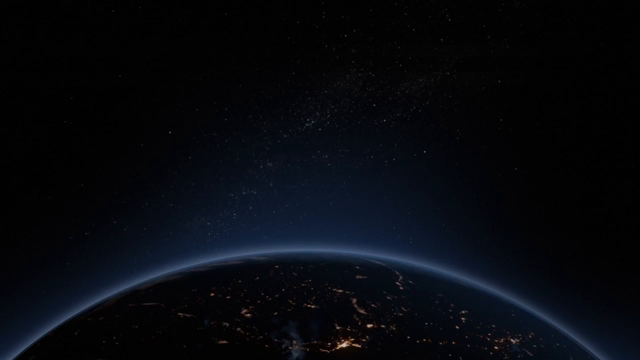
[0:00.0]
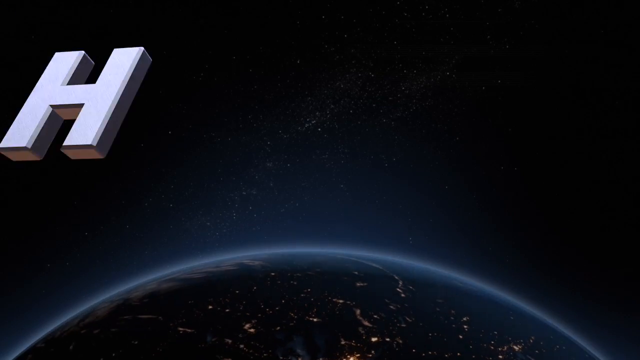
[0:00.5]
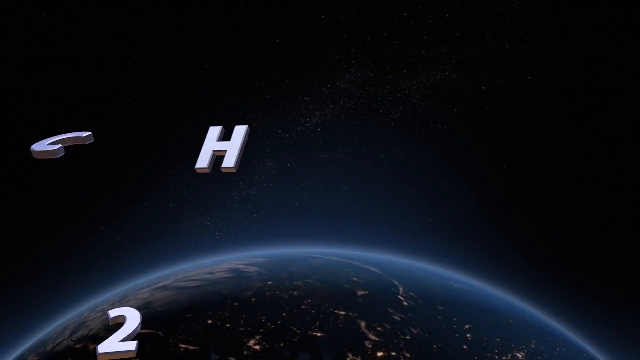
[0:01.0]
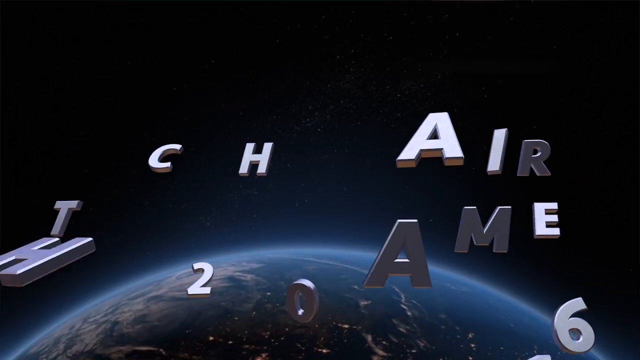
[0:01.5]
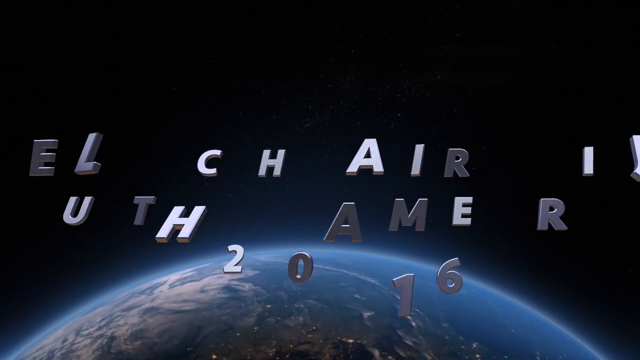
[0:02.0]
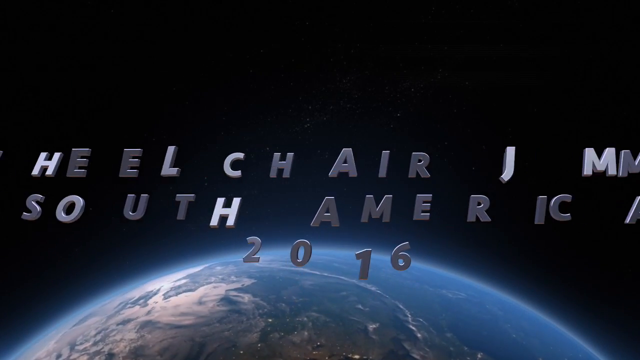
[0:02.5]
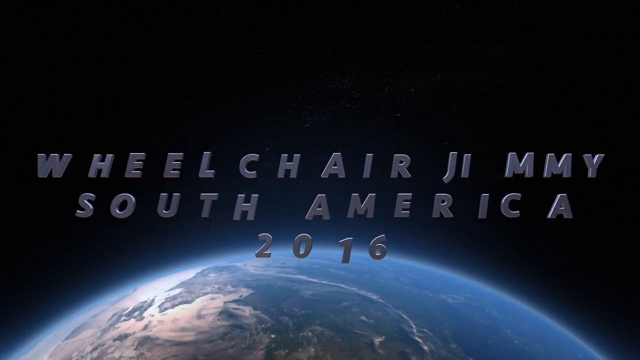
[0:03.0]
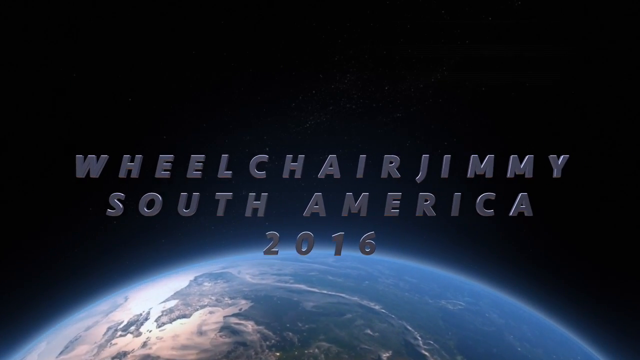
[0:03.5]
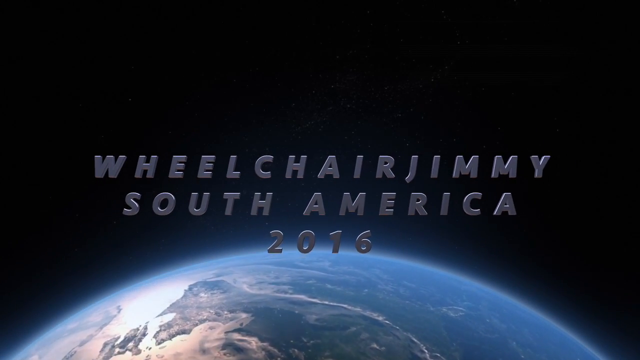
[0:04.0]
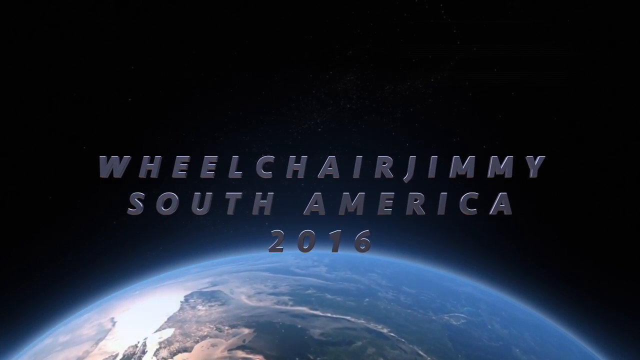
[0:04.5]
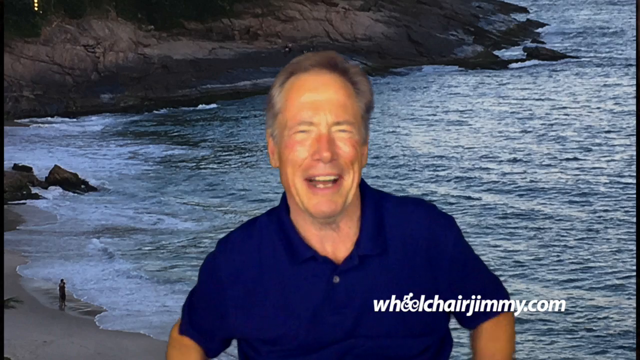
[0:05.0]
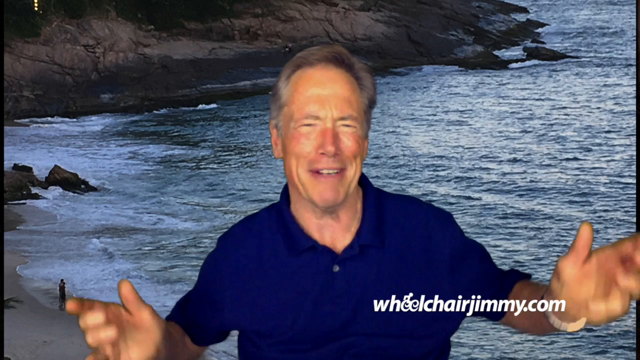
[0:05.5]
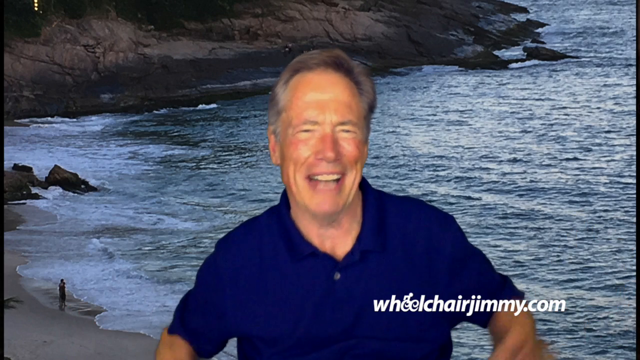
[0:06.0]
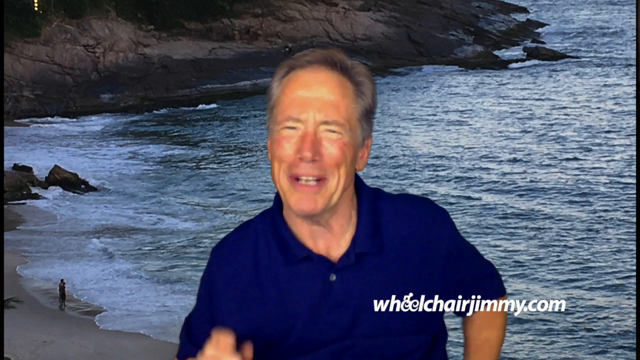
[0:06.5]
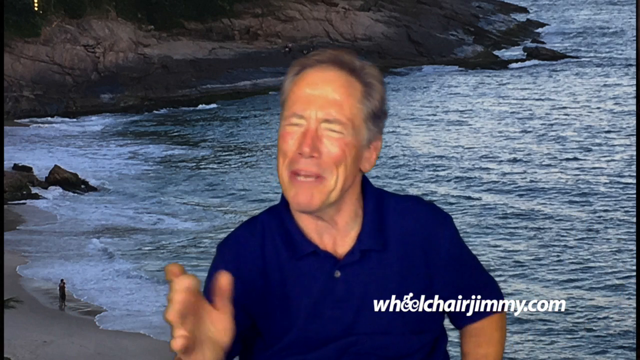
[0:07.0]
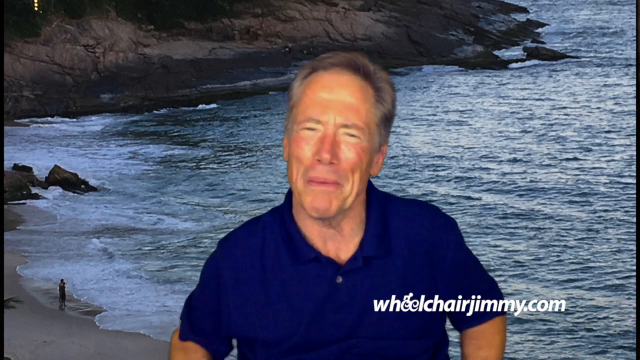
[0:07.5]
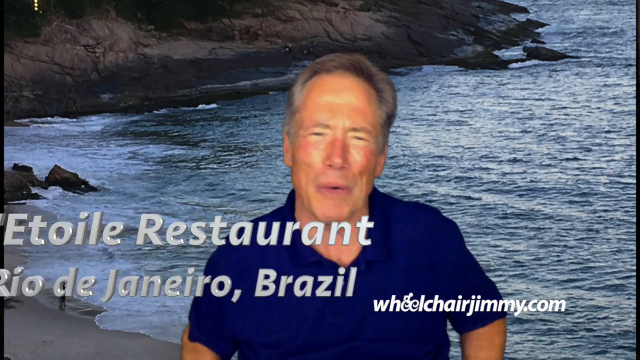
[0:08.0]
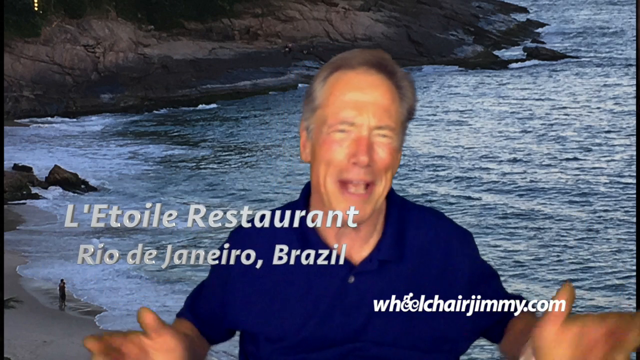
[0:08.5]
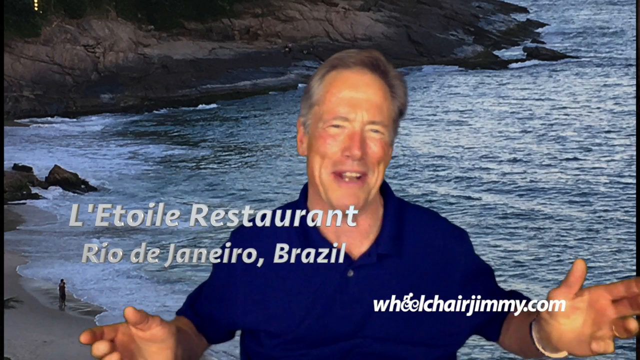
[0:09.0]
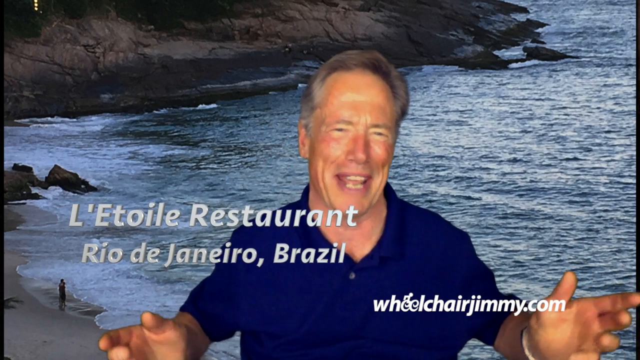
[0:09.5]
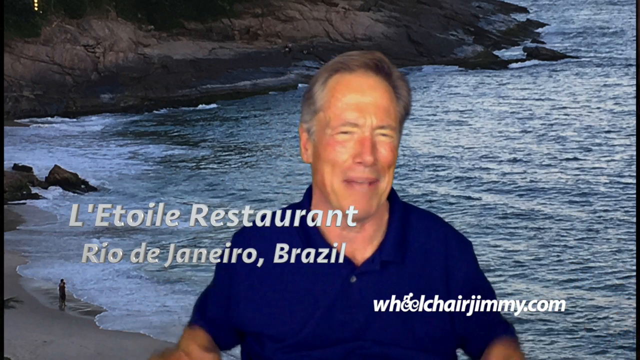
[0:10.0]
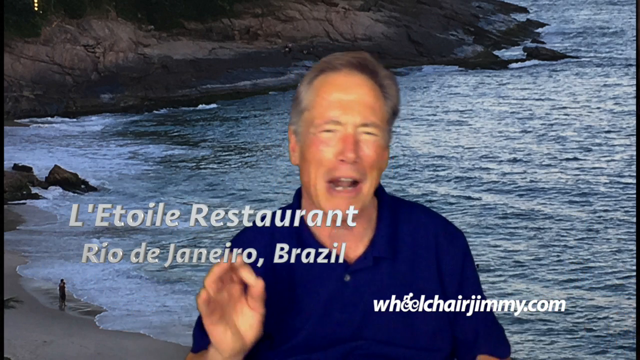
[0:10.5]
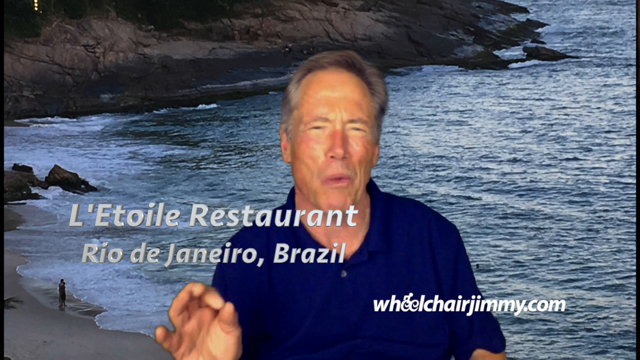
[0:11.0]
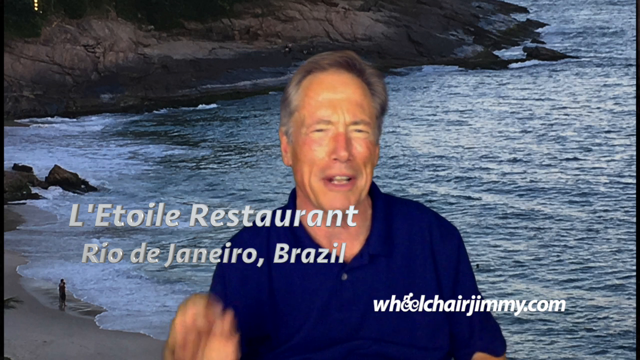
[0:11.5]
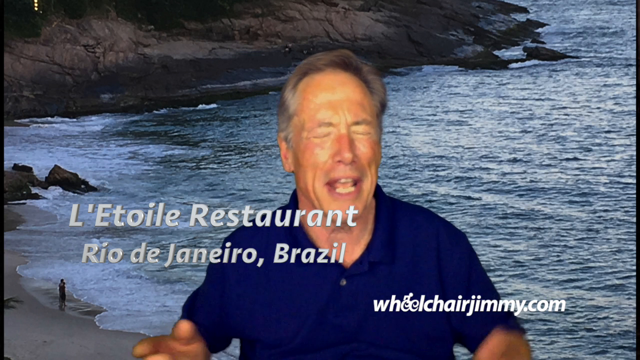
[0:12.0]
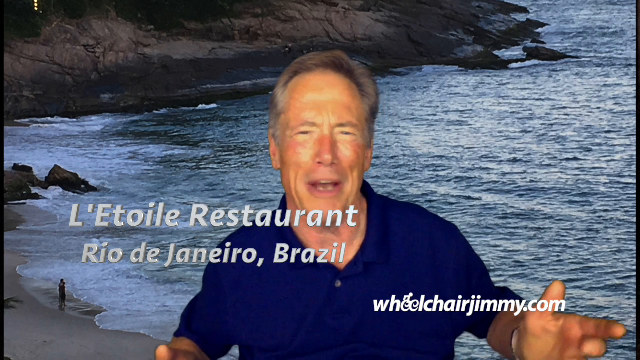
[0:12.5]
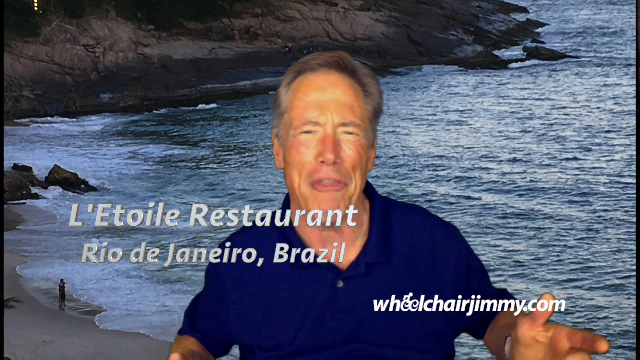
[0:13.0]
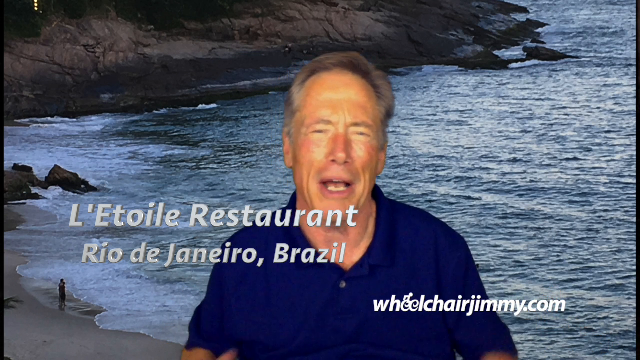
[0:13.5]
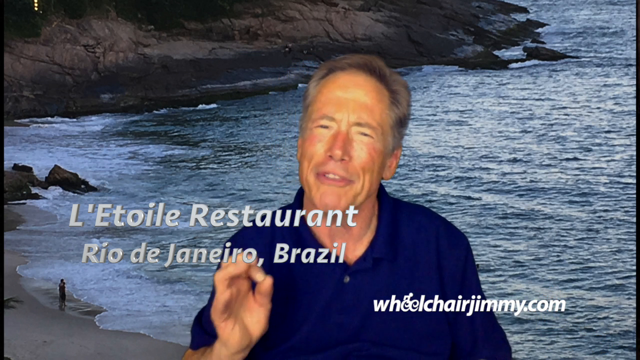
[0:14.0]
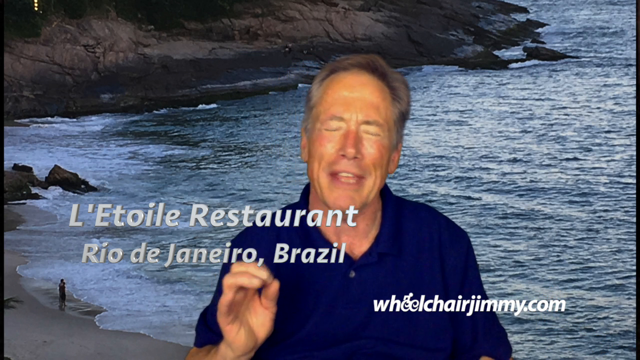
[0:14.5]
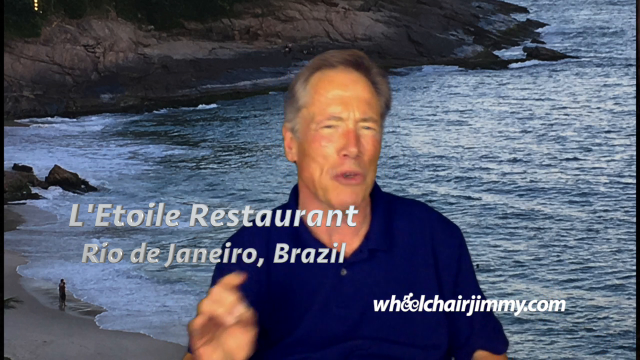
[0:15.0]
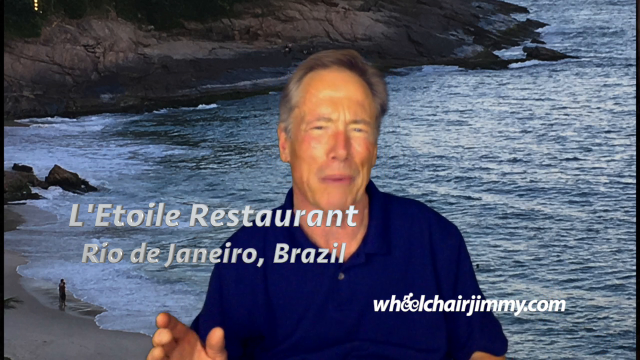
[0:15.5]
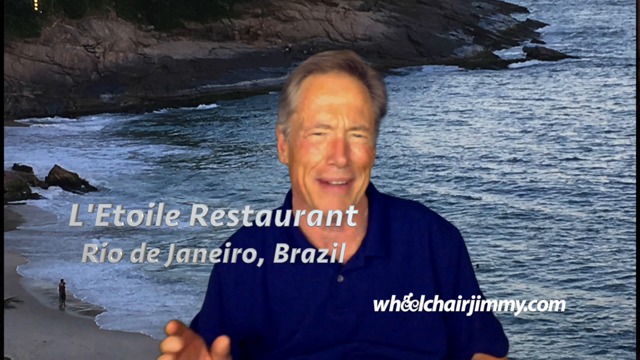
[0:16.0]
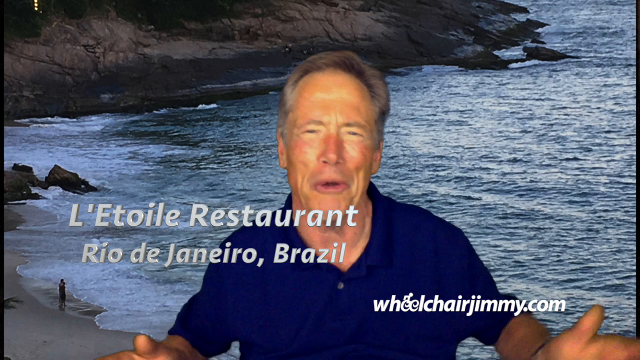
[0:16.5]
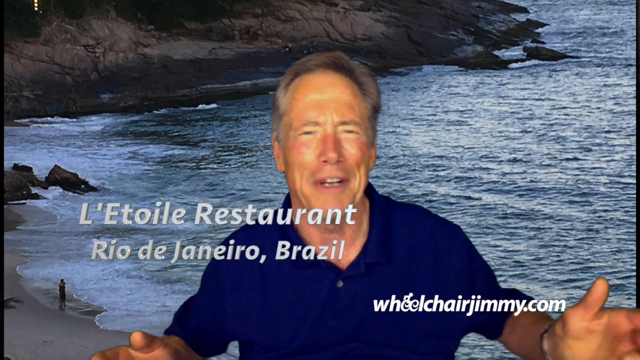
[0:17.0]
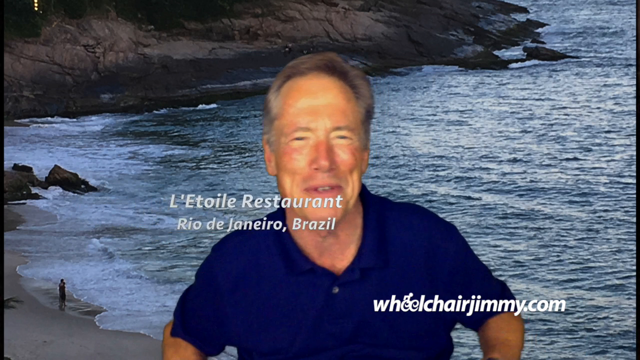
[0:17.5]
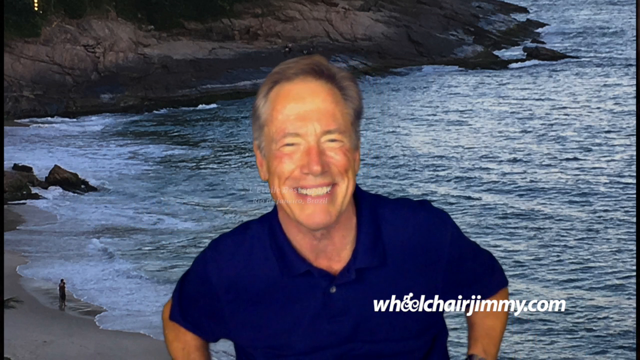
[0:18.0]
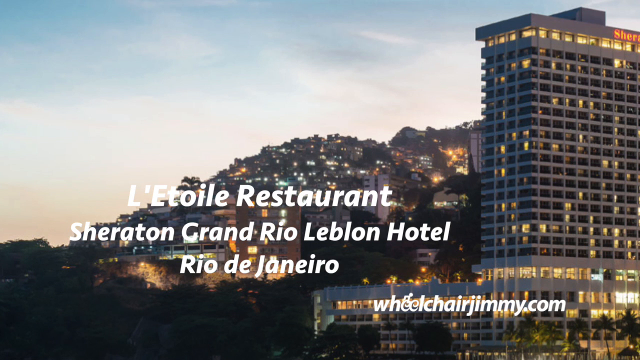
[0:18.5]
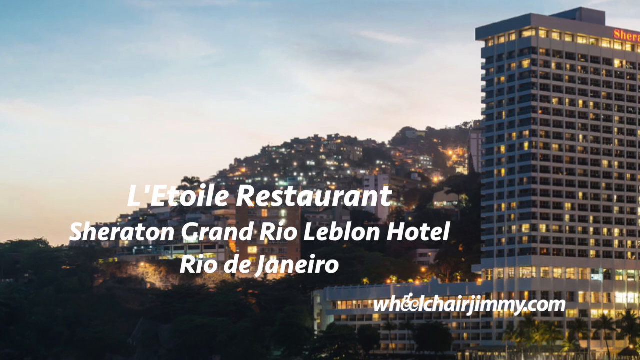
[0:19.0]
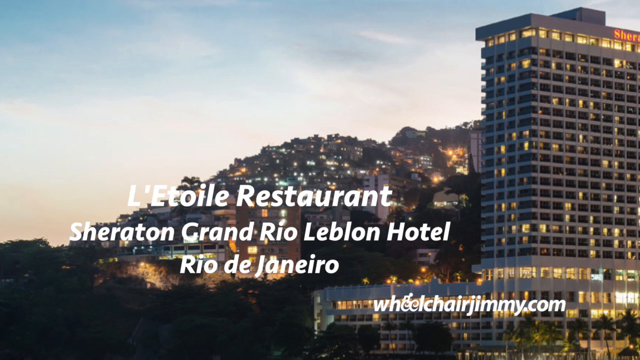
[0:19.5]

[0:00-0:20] The video opens on a dark screen, and then a picture of what appears to be the Earth appears at the bottom of the frame. Words come up reading "Wheelchair Jimmy, South America 2016." It then cuts to a man in a navy blue shirt who is speaking in front of a screen showing a picture of an ocean, with some rocks in the background. The background is a still photo, so nothing in it moves; a person is on the beach in the bottom left corner of that photo. Text then pops up on screen: "L'Etoile Restaurant, Rio de Janeiro, Brazil." The man keeps speaking, possibly about this restaurant. The image then changes to a picture of a tall hotel with many windows on the right-hand side of the frame; the start of some letters, "S-H-E-R," is visible at its top. More words pop up on screen: "L'Etoile Restaurant, Sheraton Grand Rio, Leblon Hotel, Rio de Janeiro."